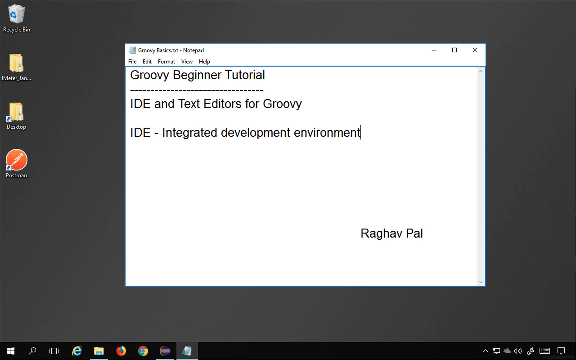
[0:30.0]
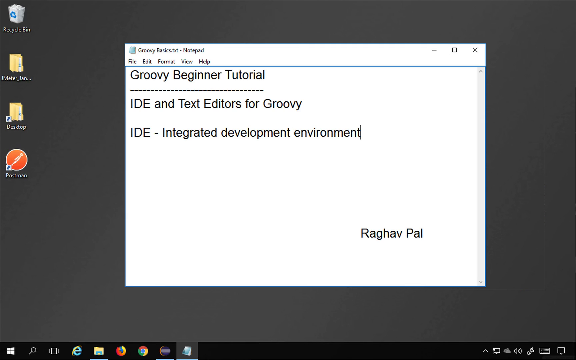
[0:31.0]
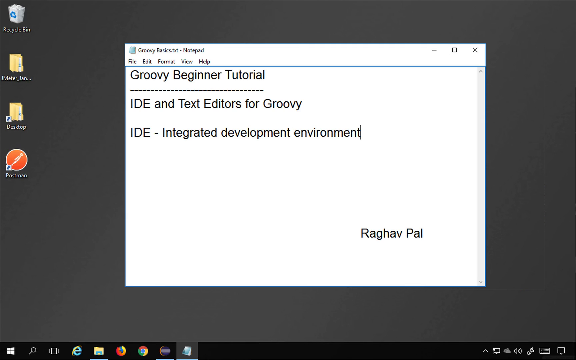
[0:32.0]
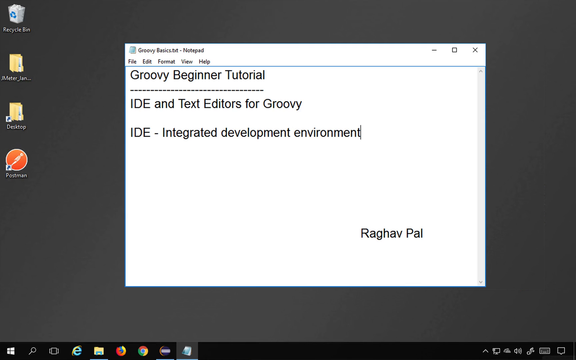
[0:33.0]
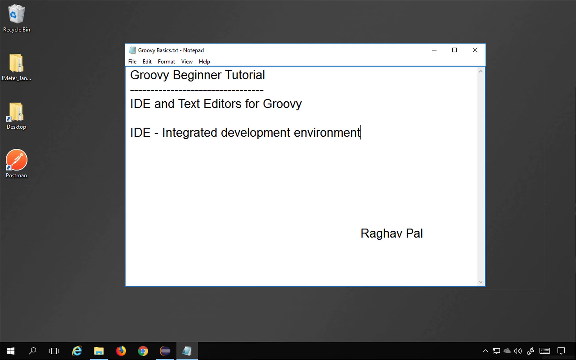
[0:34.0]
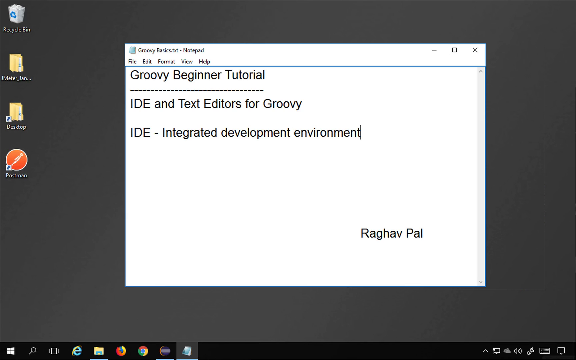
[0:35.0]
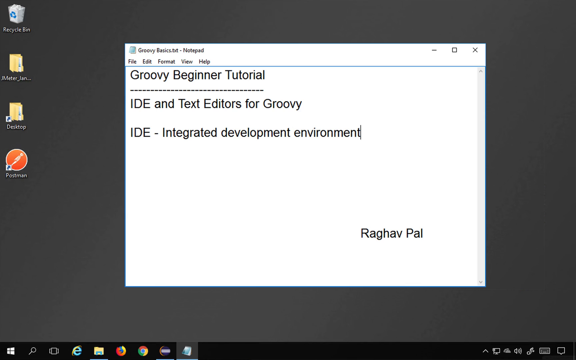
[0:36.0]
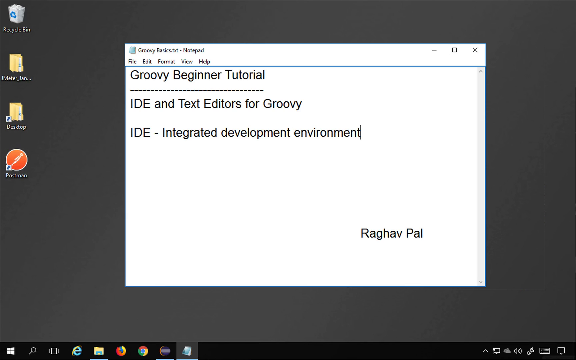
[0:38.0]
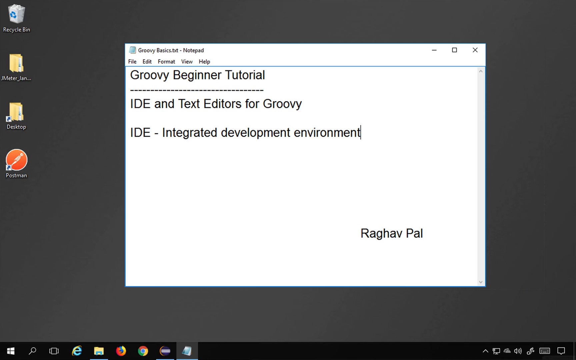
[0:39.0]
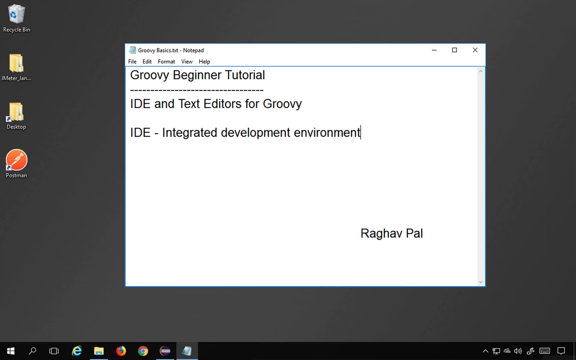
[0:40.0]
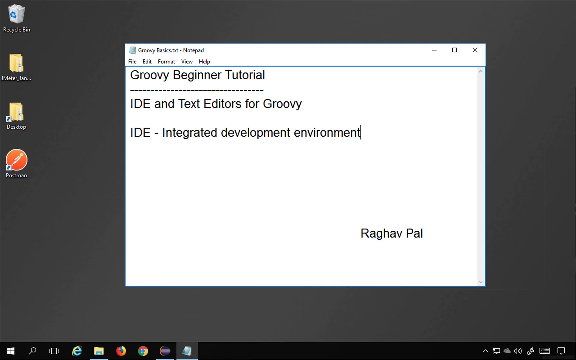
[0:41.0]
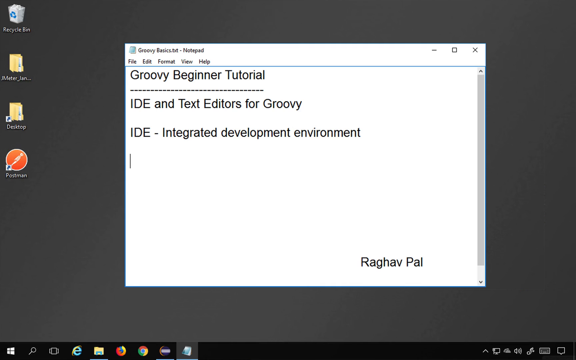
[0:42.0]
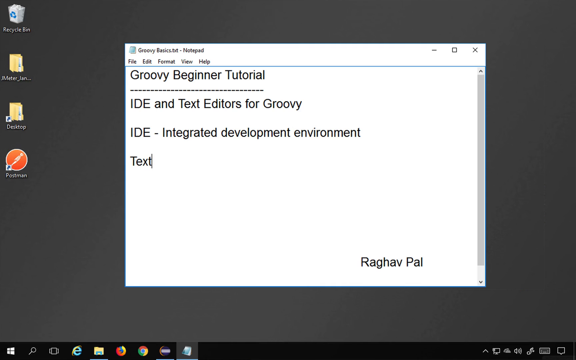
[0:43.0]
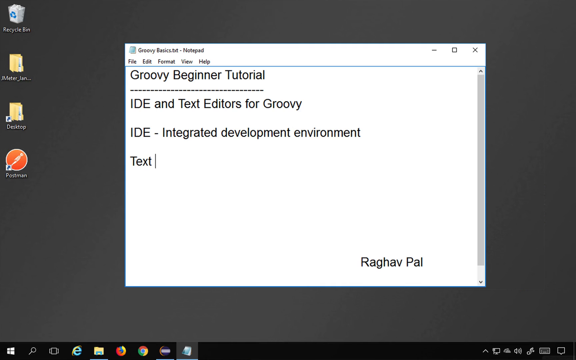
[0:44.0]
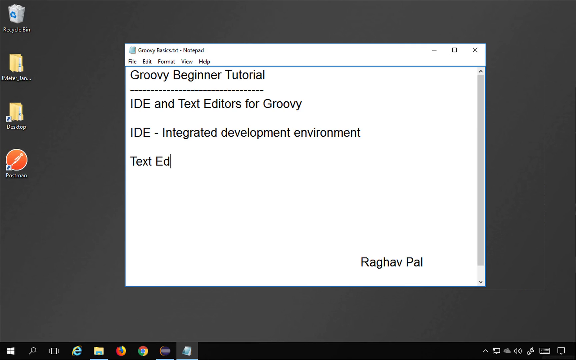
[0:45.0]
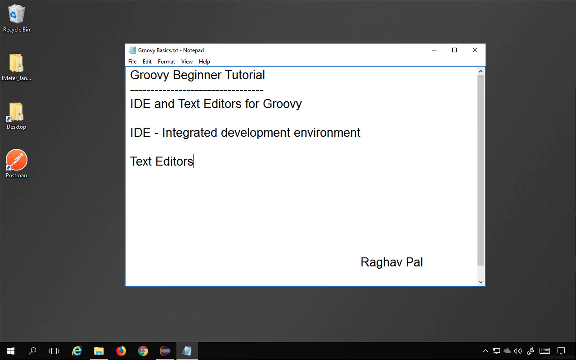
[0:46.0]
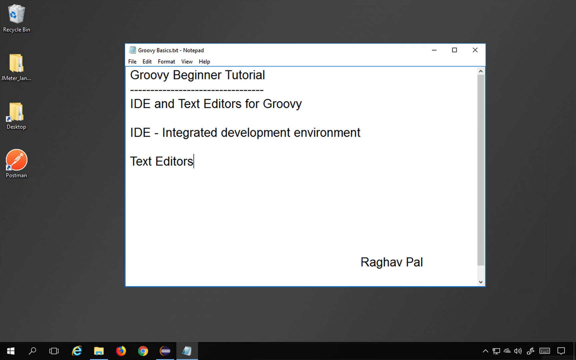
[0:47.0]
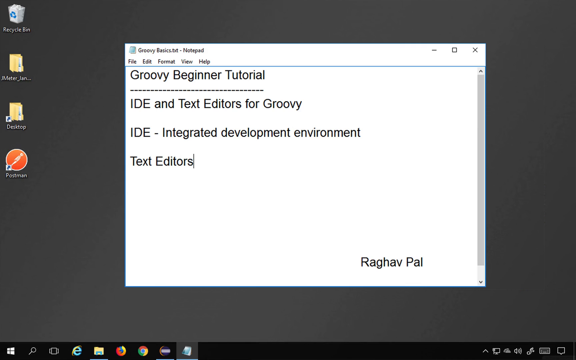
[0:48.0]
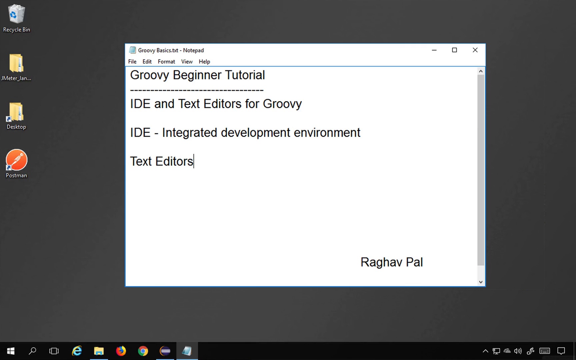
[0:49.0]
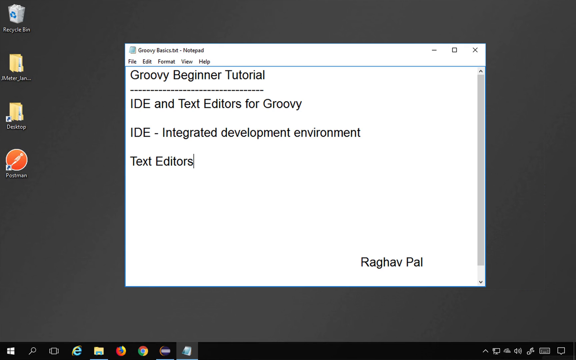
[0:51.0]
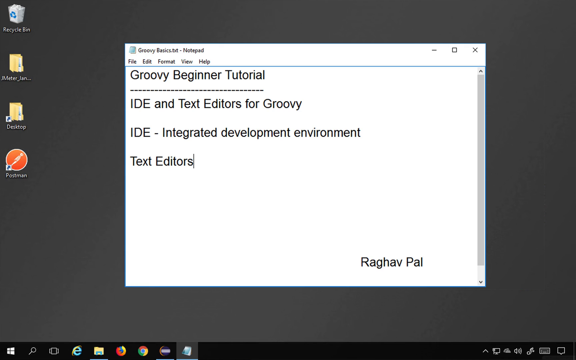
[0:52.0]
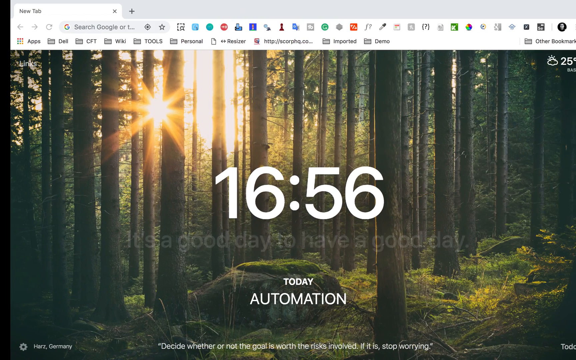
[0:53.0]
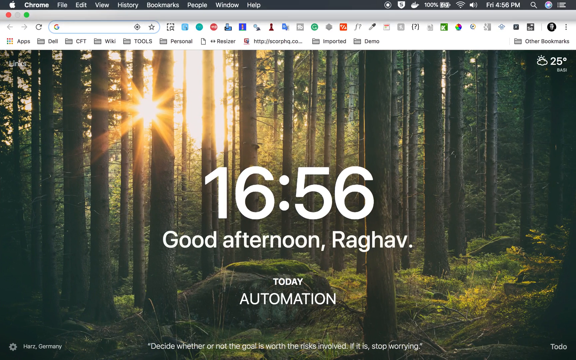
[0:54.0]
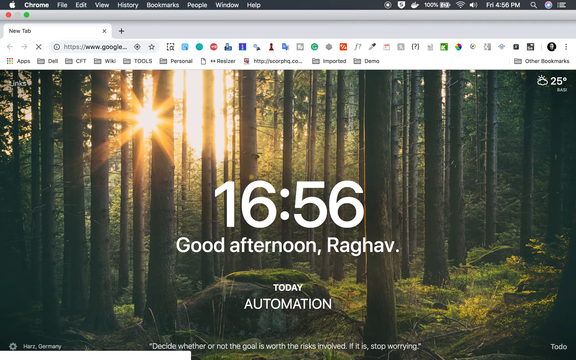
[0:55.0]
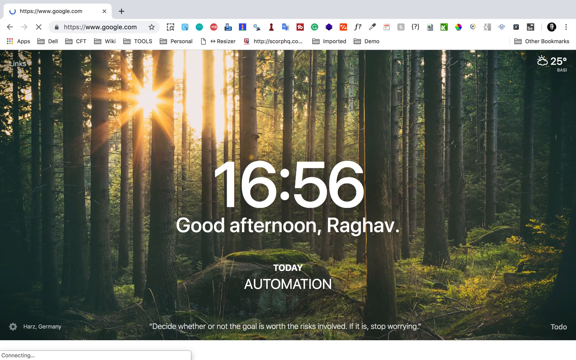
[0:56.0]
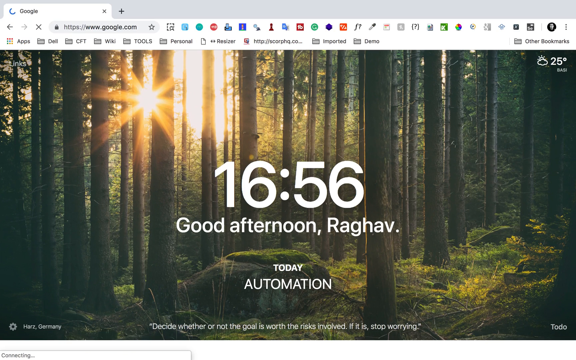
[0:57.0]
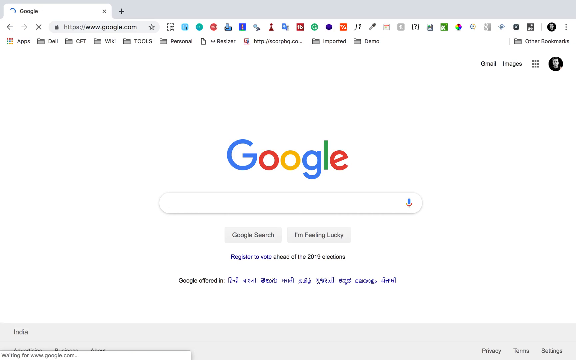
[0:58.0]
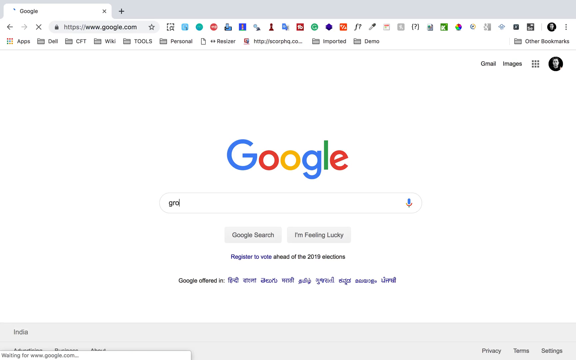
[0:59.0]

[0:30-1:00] A PC monitor shows a gray screen with four shortcuts on the left and a white pop-up box in the middle. The text at the top of the box reads "Groovy Basic TXT-Notepad", with tabs below it for File, Edit, Format, View and Help. A blue line runs across the entire box, and below it the text reads "Groovy Beginner Tutorial", followed by a dashed line, then "IDE and text editors for Groovy" and "IDE-Integrated Development Environment". Below that, to the right, is the name Raghav Pal. The cursor moves as the text "text editors" appears on the screen. The video then transitions to a forest screensaver showing multiple trees from their trunks with sunlight shining through them from above. In the middle is the time 1656 and the greeting "good afternoon, Raghav". The video then transitions to a Google search page.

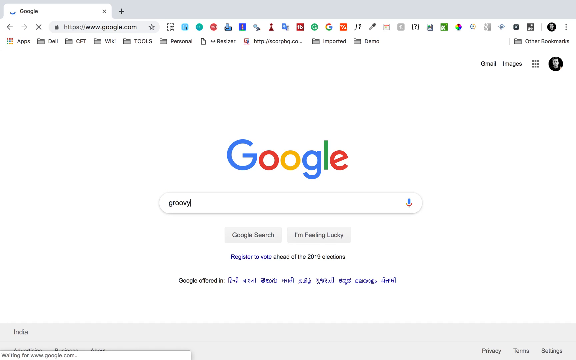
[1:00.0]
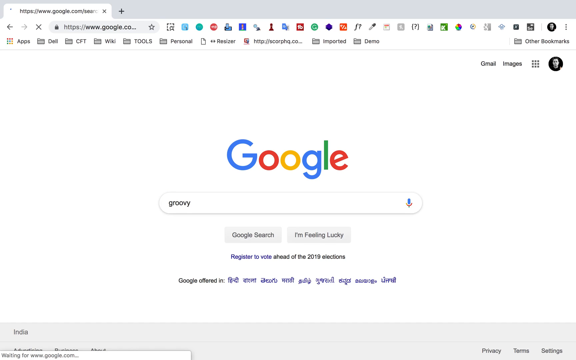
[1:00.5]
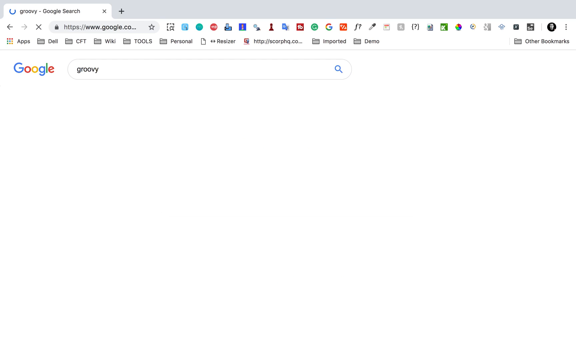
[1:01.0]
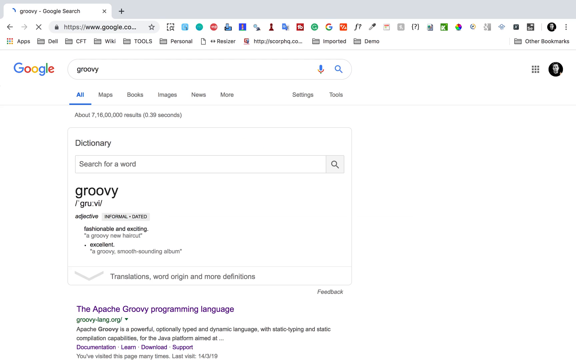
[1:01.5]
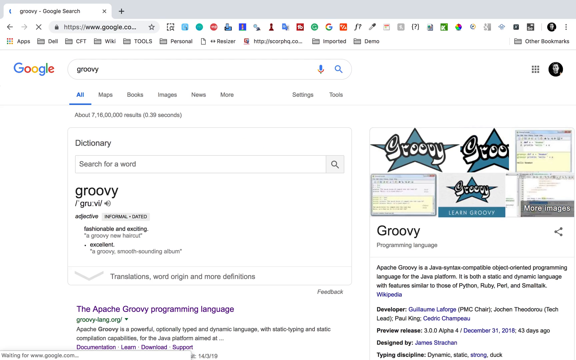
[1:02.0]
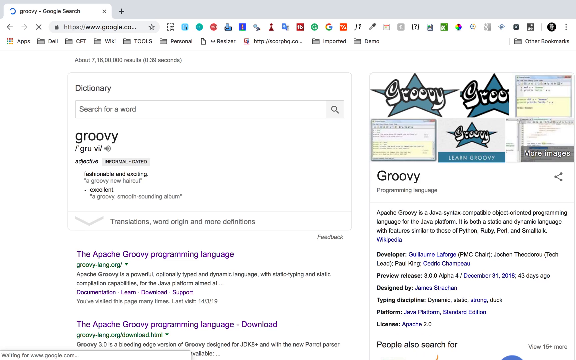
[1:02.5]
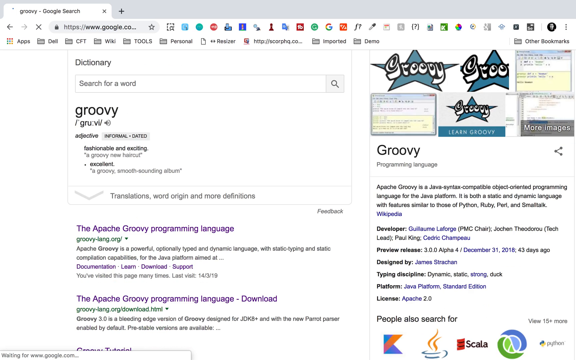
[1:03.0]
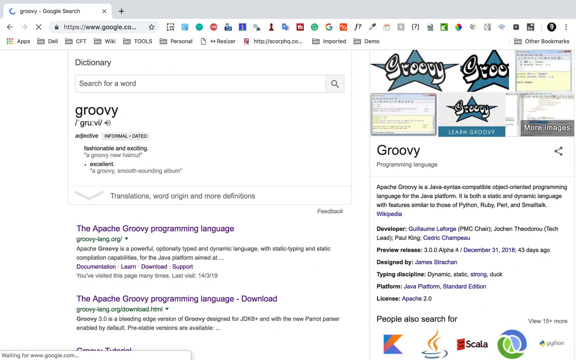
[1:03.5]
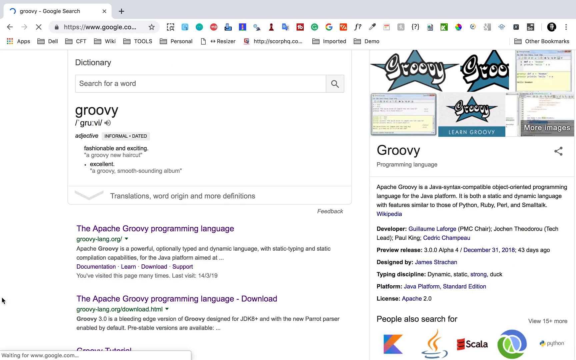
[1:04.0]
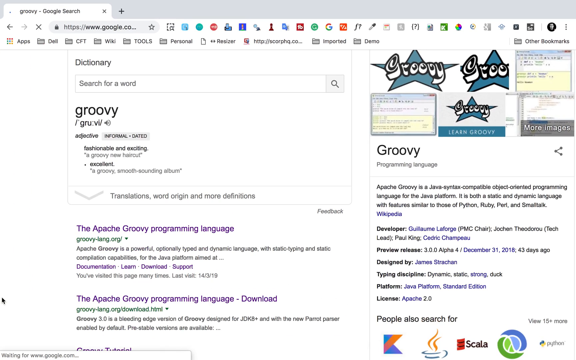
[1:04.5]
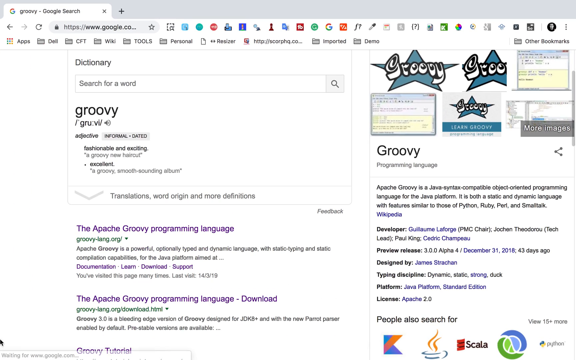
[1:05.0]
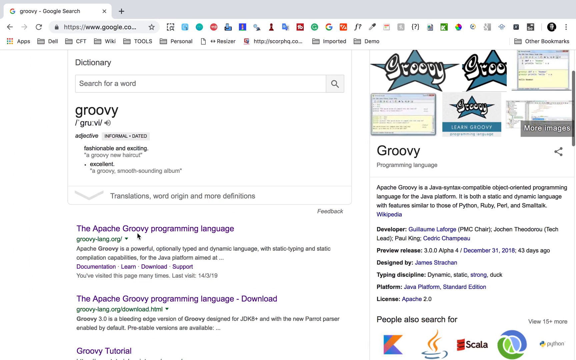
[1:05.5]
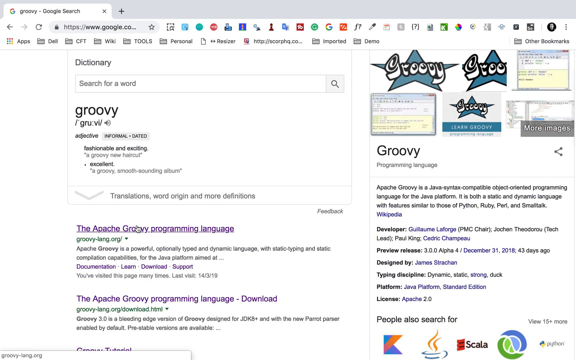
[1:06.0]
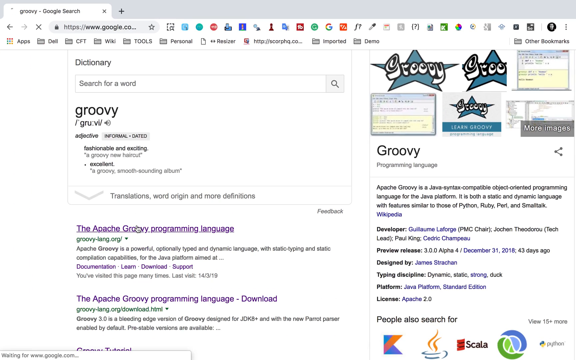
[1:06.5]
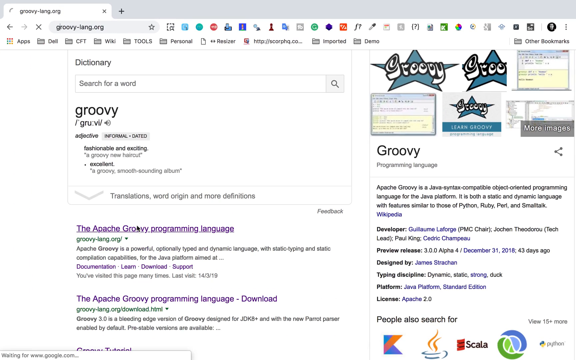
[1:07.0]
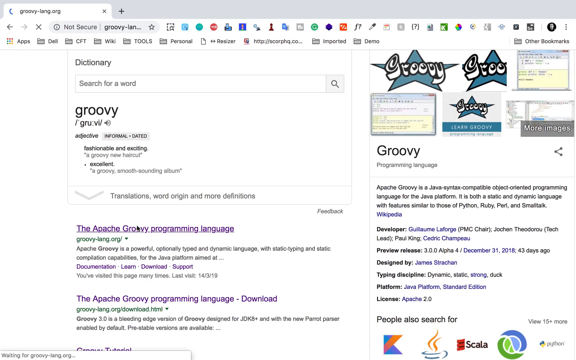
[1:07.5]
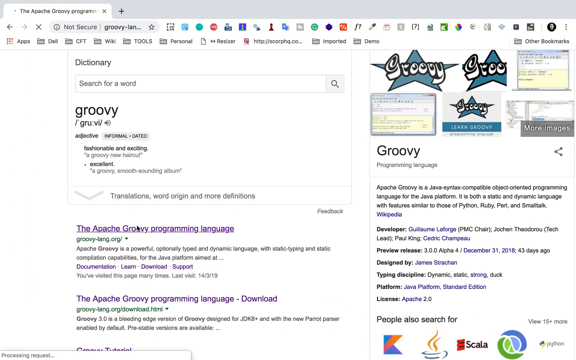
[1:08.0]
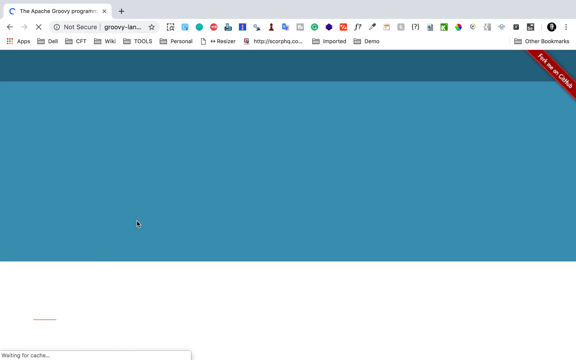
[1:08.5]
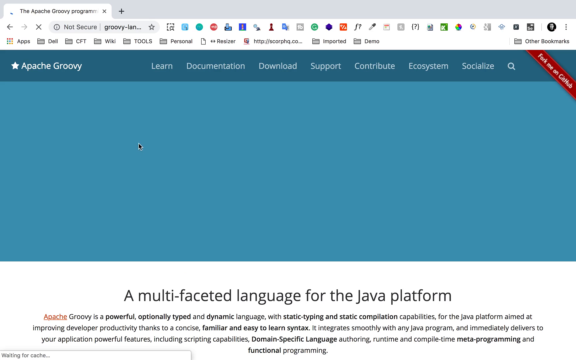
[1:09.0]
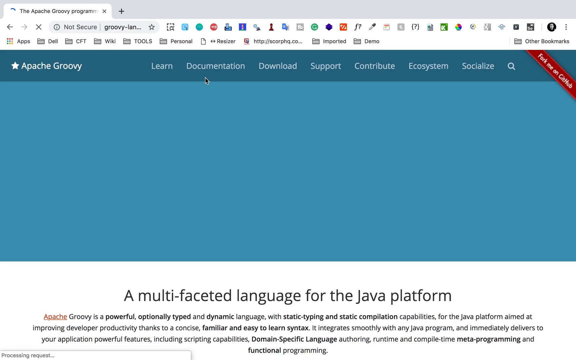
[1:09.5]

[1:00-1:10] A PC monitor shows a Google search page with the "I'm feeling lucky" button and tabs for Gmail and Images. The browser toolbar is packed with all sorts of shortcuts, with at least 10 apps beneath it and a folder for other bookmarks to the right. At the top far right is a photograph of a man in a circle. The cursor in the Google search box has typed the word "groovy". The results show a dictionary explanation for groovy and the Groovy programming language, with two searches beneath the definition.